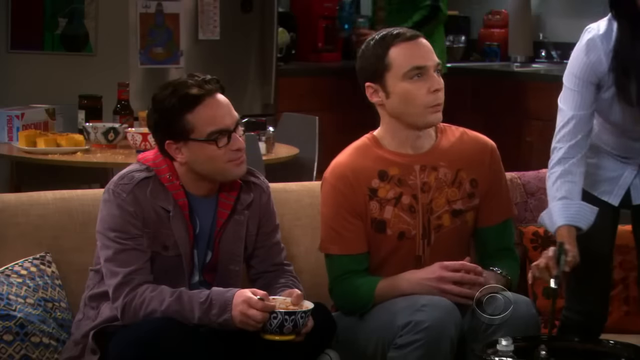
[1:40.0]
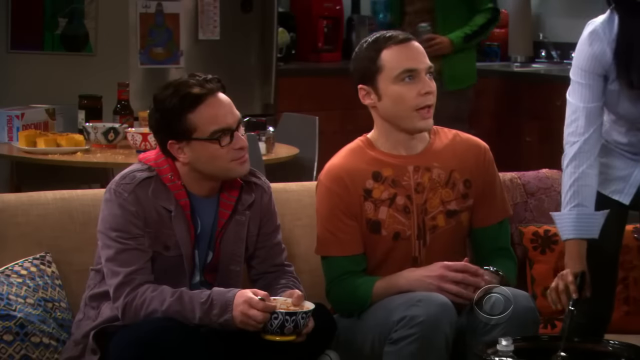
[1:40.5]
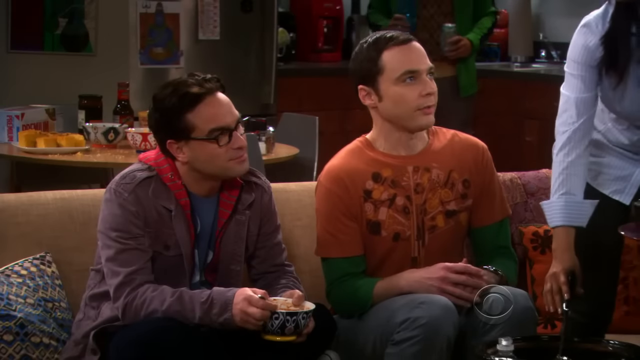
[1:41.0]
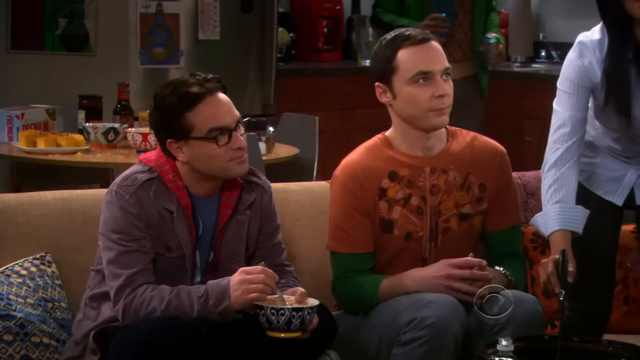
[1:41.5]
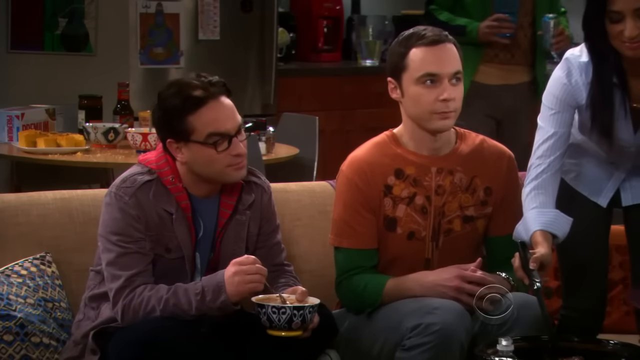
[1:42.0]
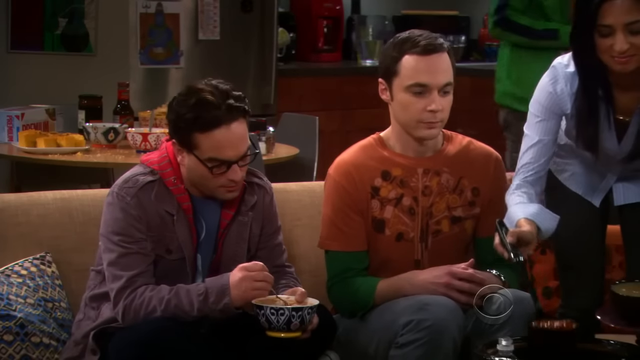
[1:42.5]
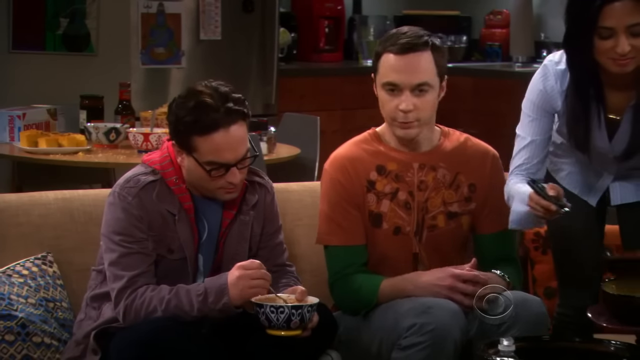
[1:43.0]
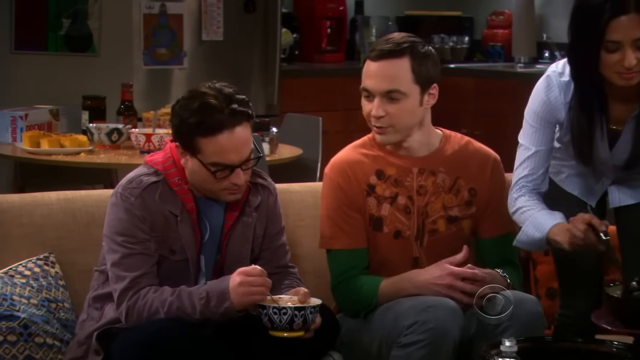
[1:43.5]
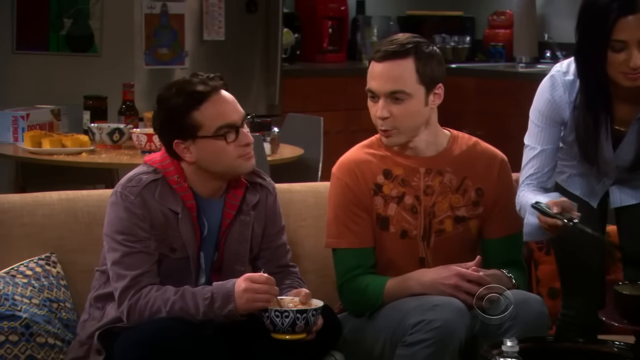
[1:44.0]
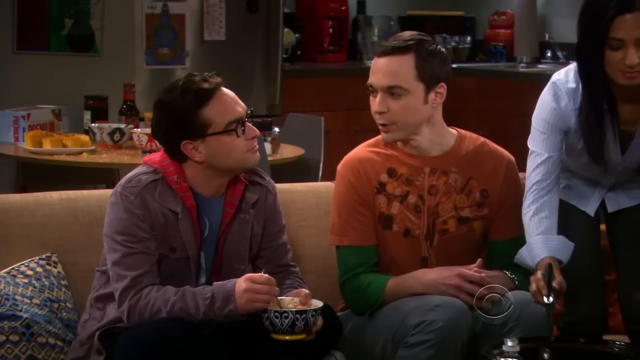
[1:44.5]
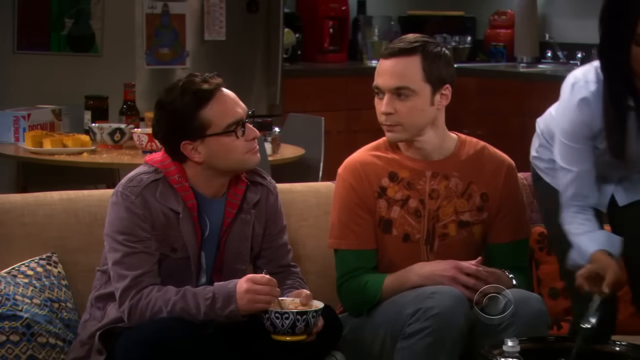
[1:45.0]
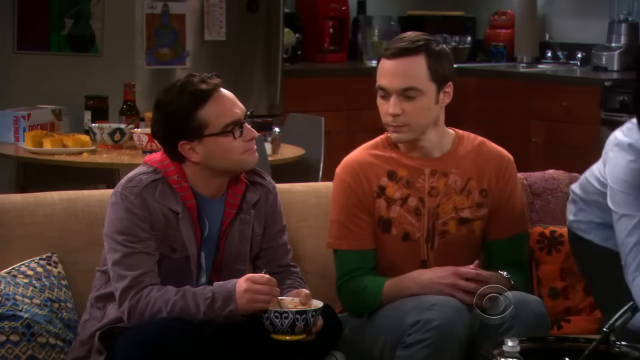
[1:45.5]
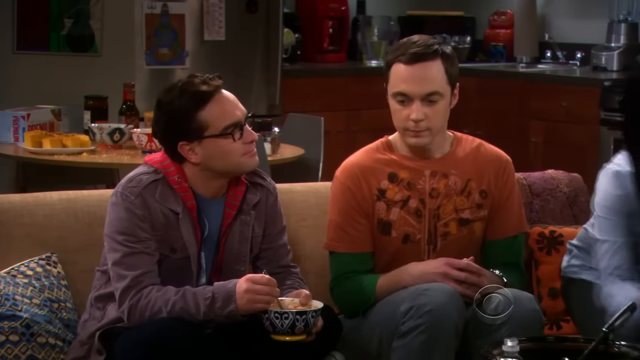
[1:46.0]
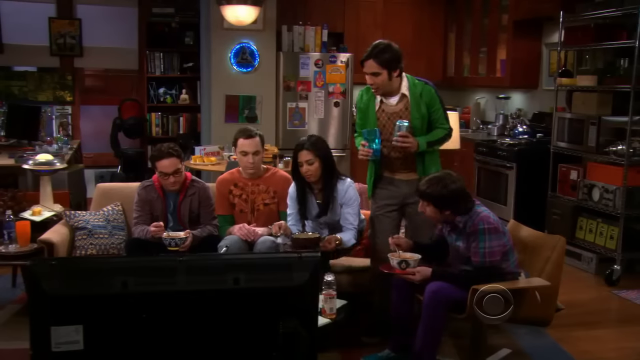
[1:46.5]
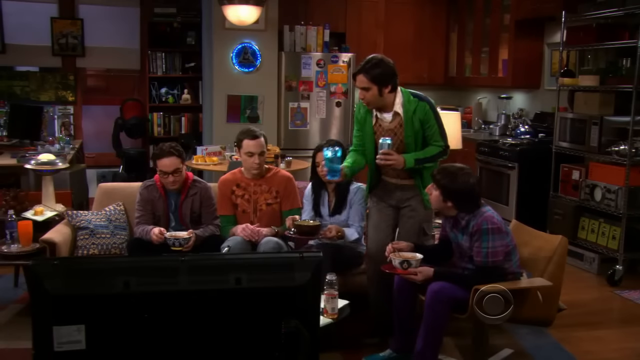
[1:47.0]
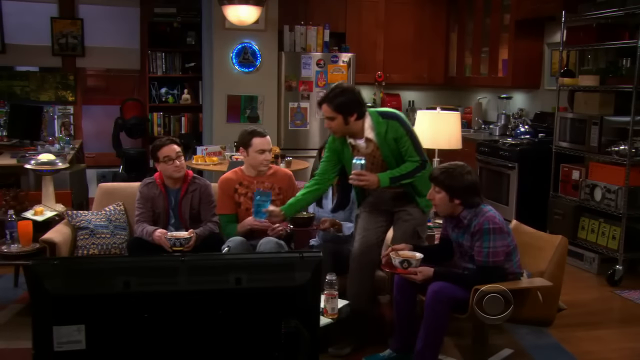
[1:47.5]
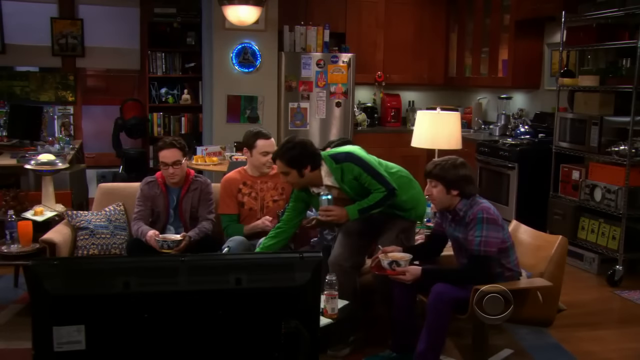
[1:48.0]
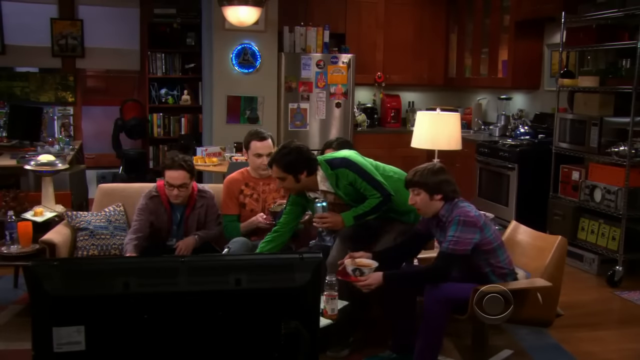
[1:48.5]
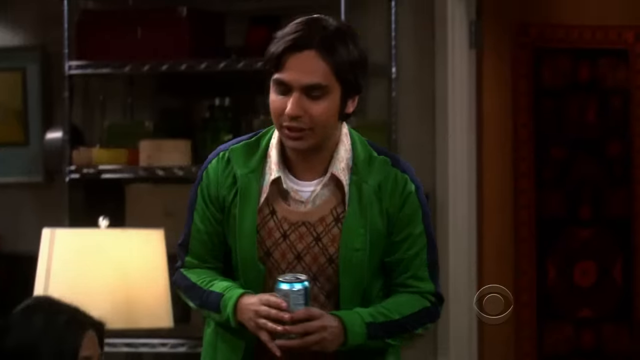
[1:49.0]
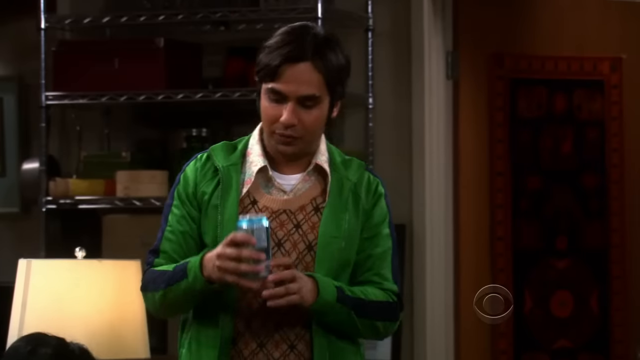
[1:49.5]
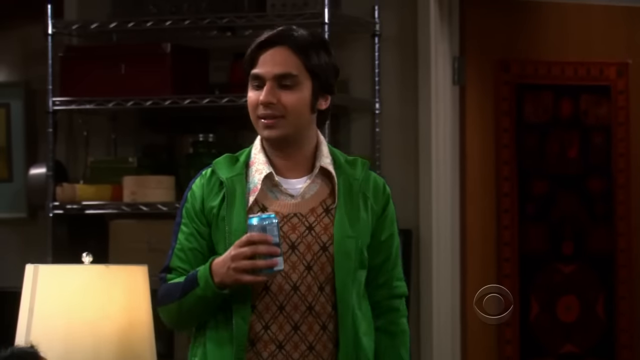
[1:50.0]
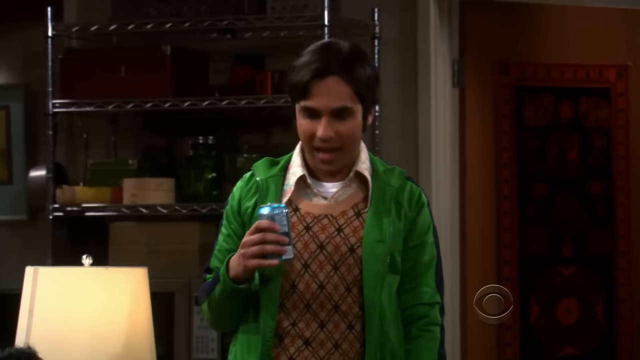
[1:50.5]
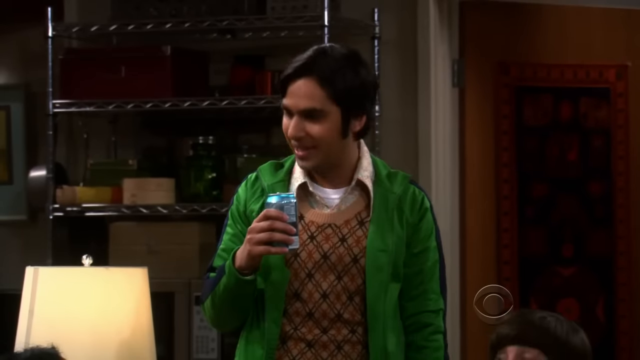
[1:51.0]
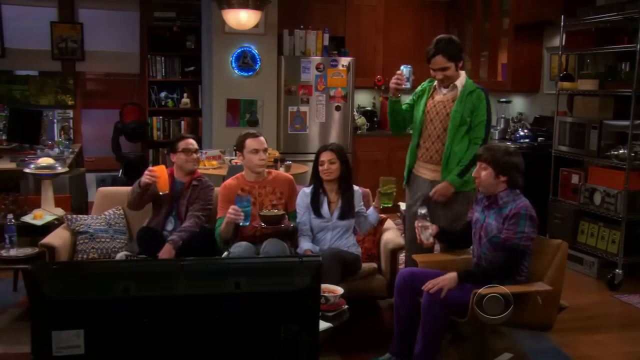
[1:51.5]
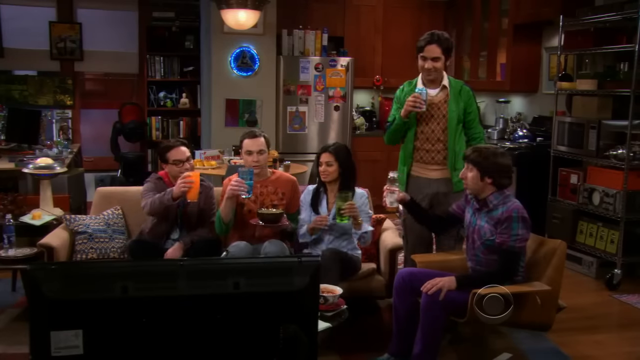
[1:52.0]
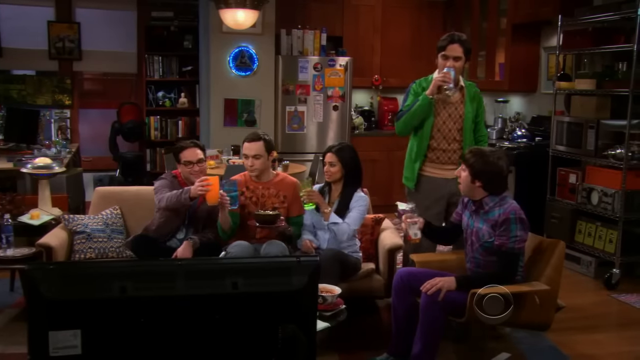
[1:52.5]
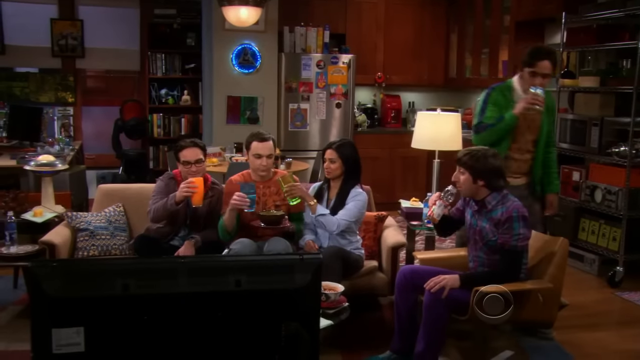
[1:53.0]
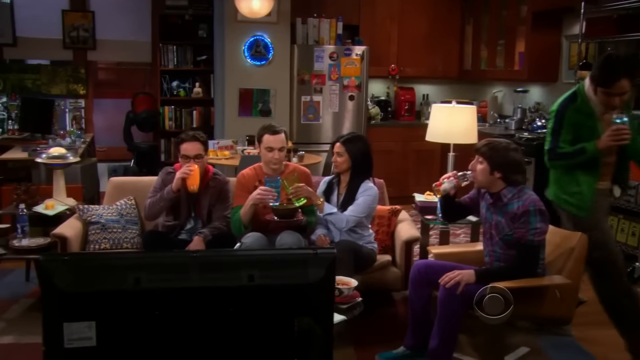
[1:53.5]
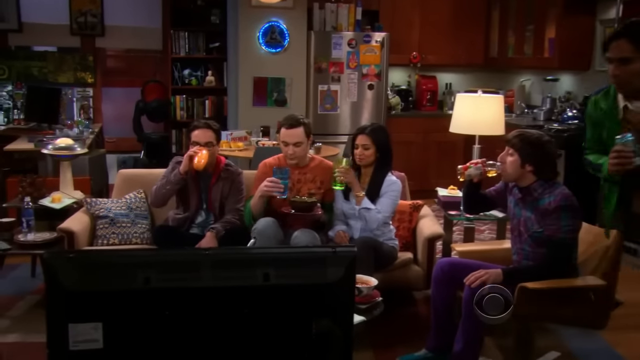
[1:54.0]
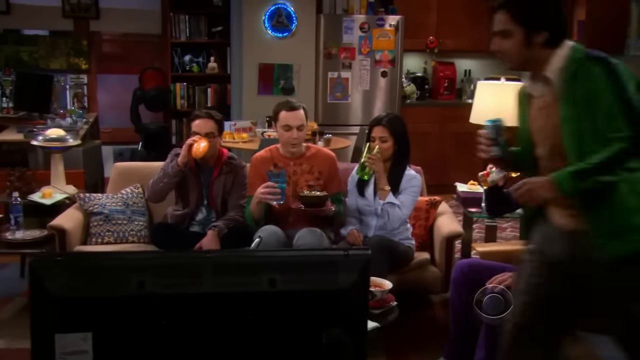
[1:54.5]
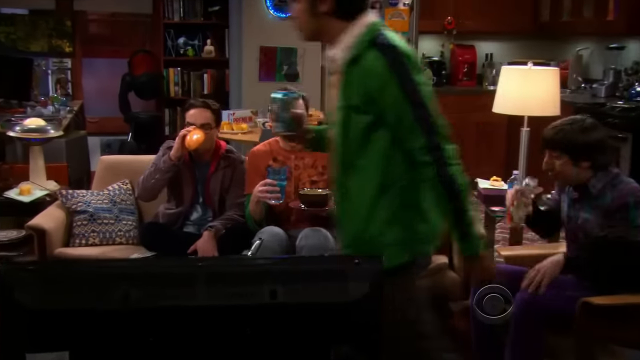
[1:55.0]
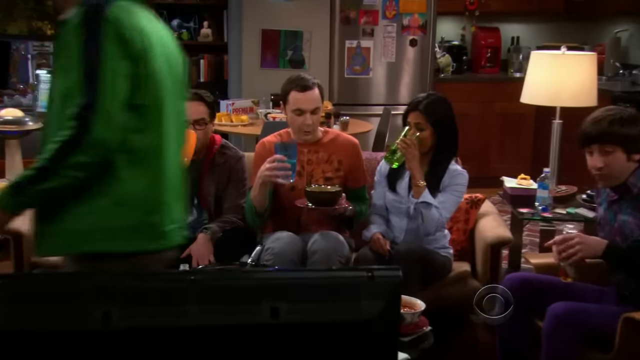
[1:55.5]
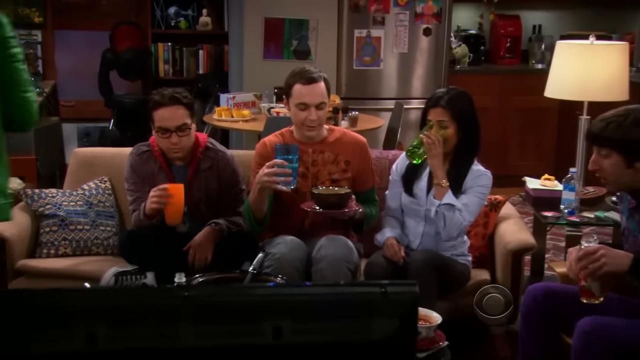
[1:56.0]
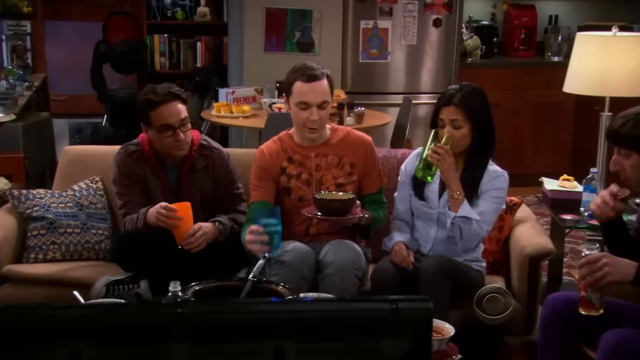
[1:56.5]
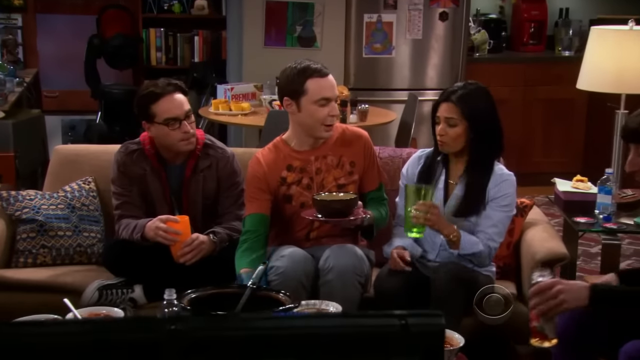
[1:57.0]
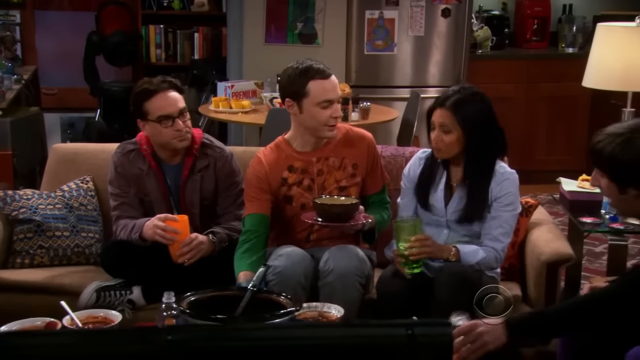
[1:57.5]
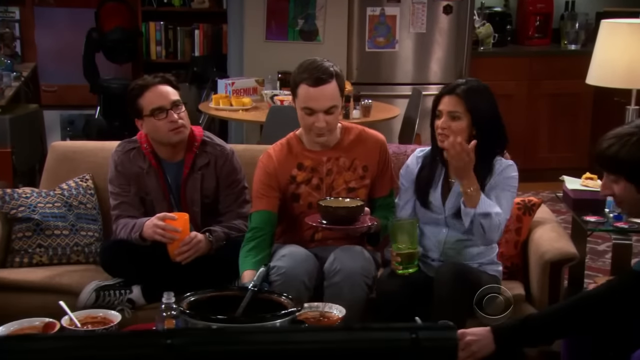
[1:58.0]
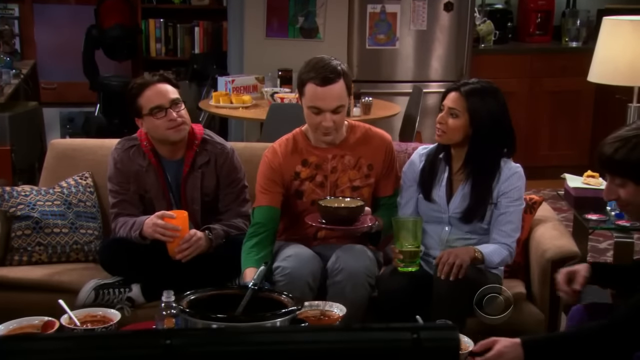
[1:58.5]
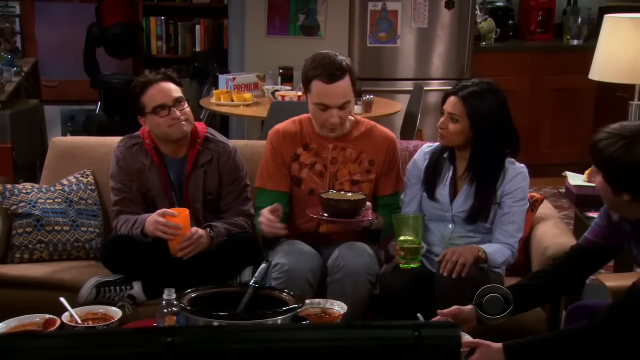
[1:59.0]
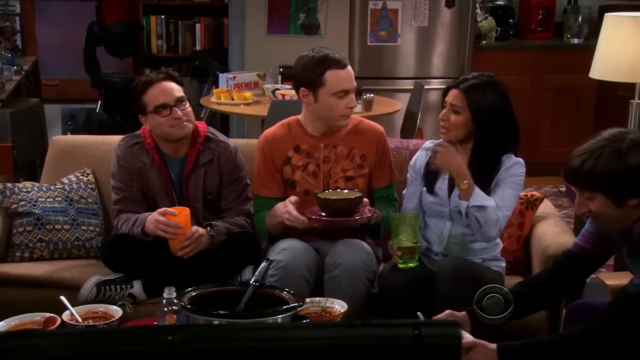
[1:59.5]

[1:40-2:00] Sheldon and Leonard sit on the couch. Leonard is still stirring his soup and sort of shaking his leg, and he talks to Raj's girlfriend. Raj comes over with drinks, bringing Sheldon what looks like a glass of plain water, and they all toast with different colored cups. Raj then goes to sit back down. The girlfriend keeps lifting her arms, talking with her hands a lot, while Sheldon seems to thank her and mumbles something to Leonard. A neon light, like a neon clock, is on the wall behind them. The refrigerator is covered with lots of stuff like magnets, and food, beer and bowls are left on the kitchen table.